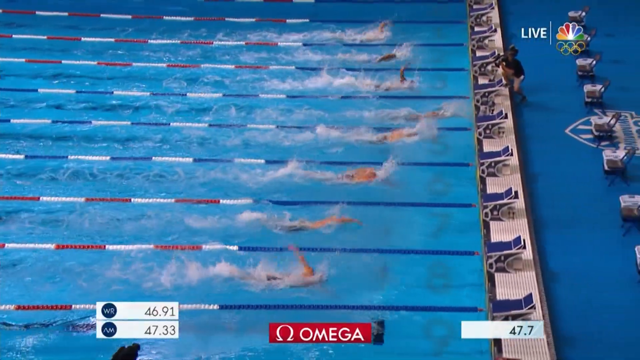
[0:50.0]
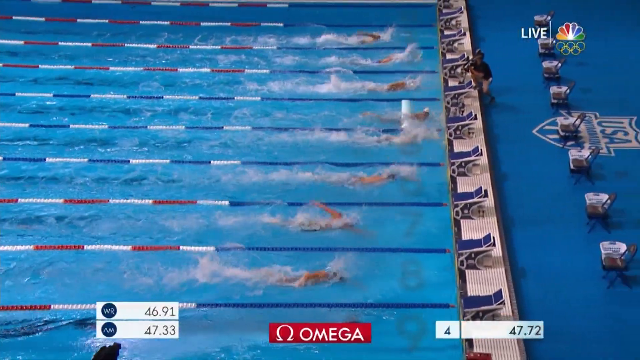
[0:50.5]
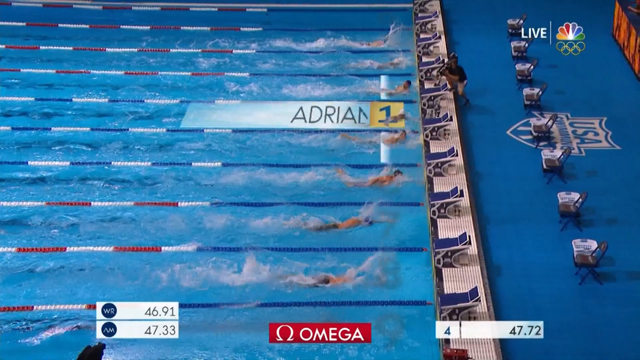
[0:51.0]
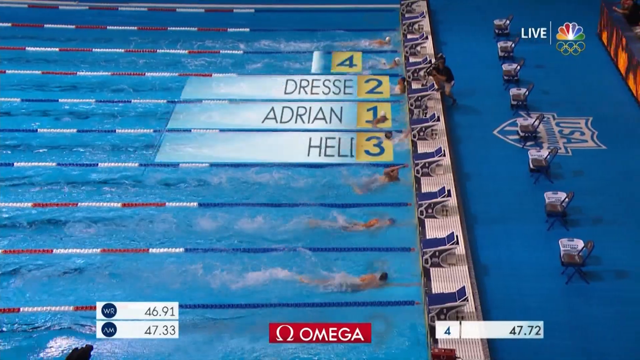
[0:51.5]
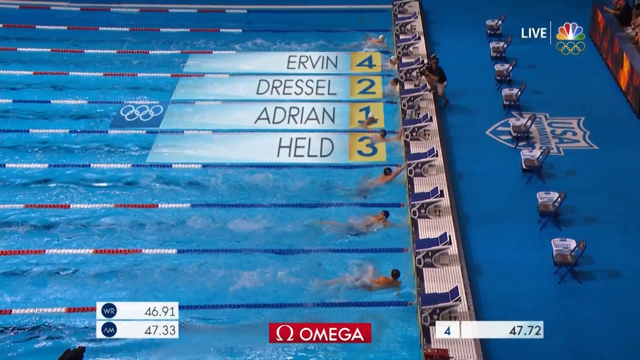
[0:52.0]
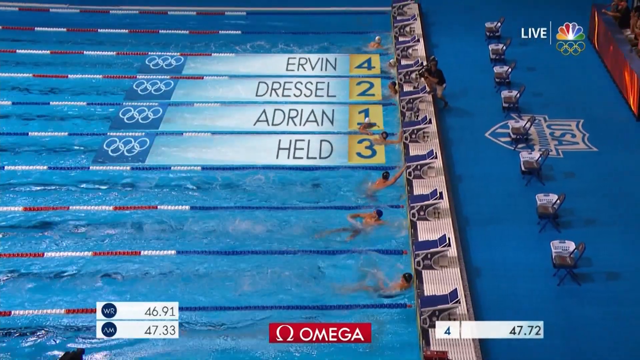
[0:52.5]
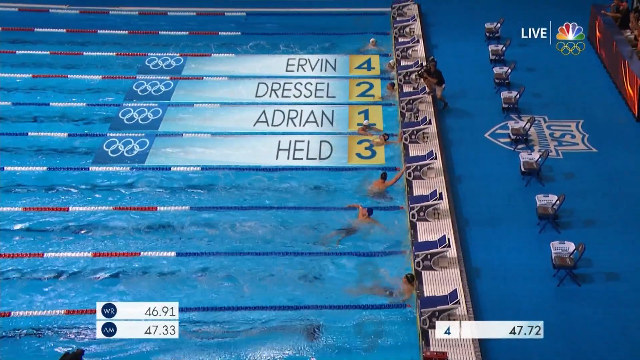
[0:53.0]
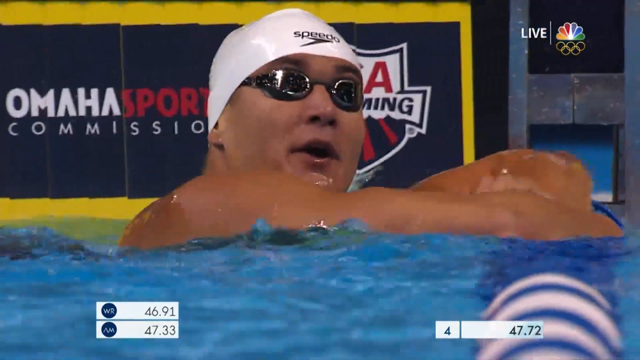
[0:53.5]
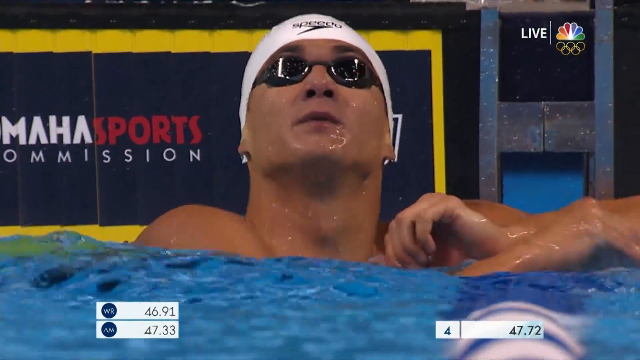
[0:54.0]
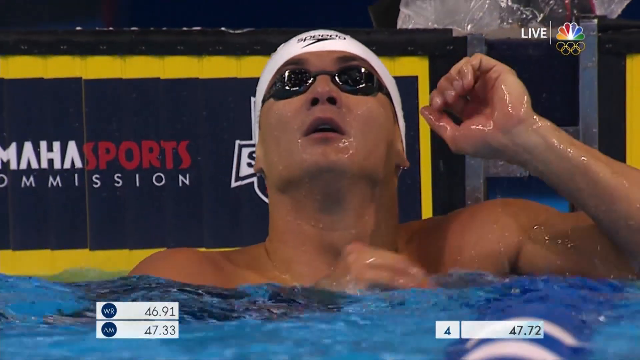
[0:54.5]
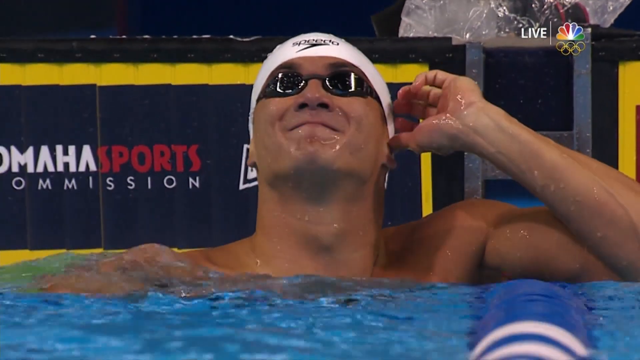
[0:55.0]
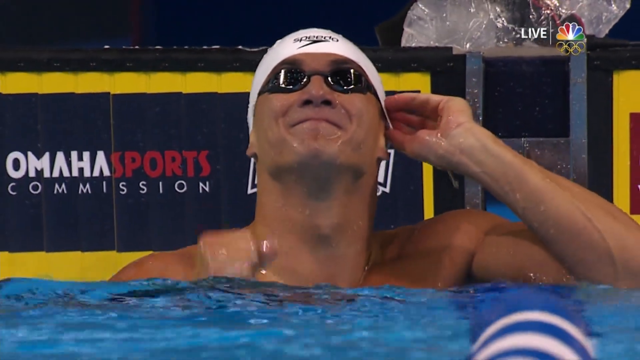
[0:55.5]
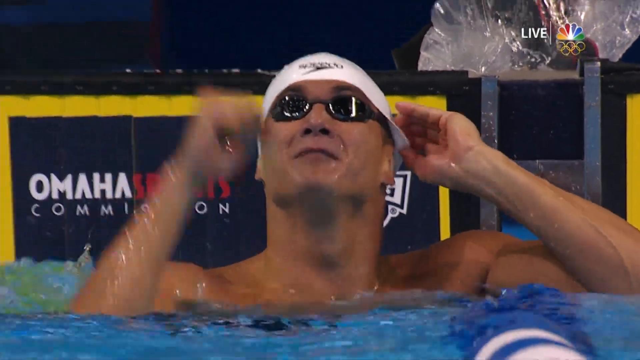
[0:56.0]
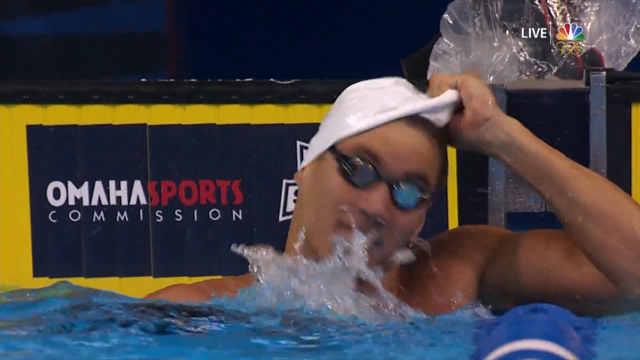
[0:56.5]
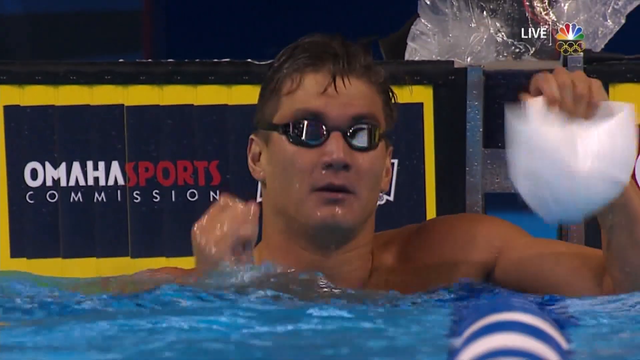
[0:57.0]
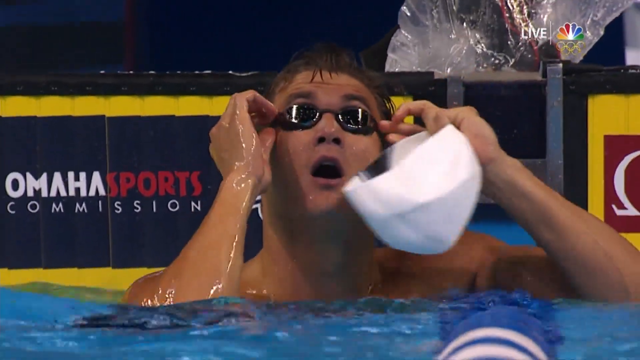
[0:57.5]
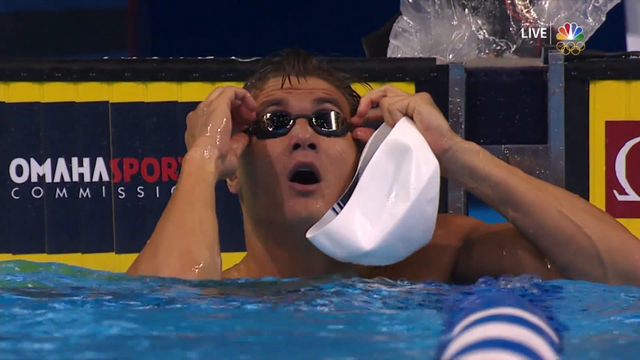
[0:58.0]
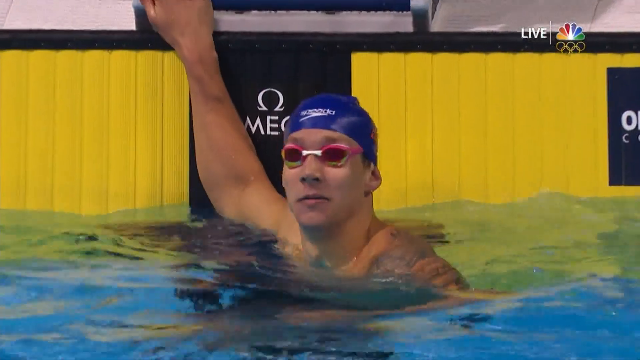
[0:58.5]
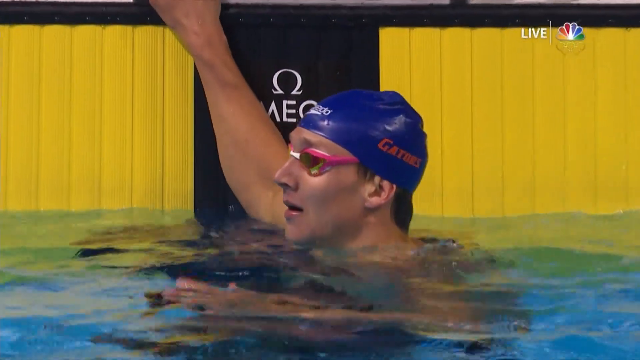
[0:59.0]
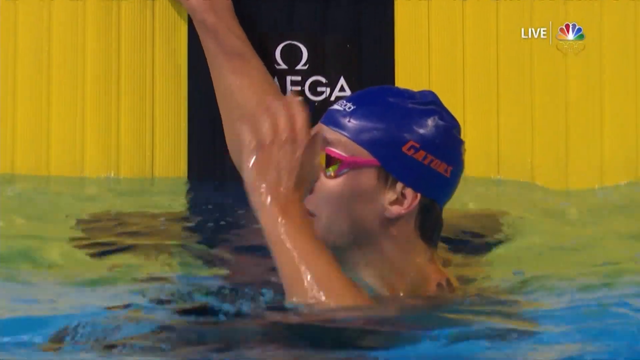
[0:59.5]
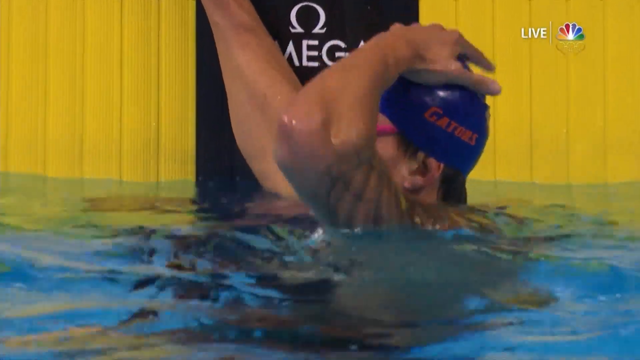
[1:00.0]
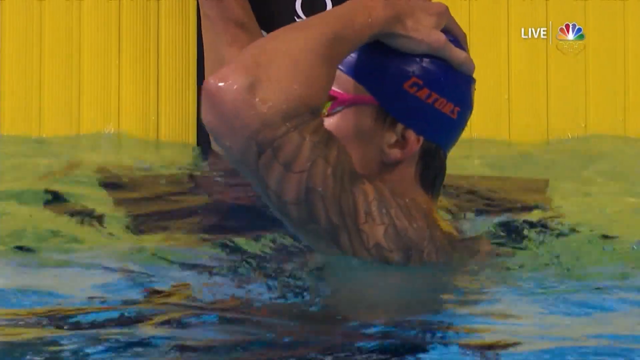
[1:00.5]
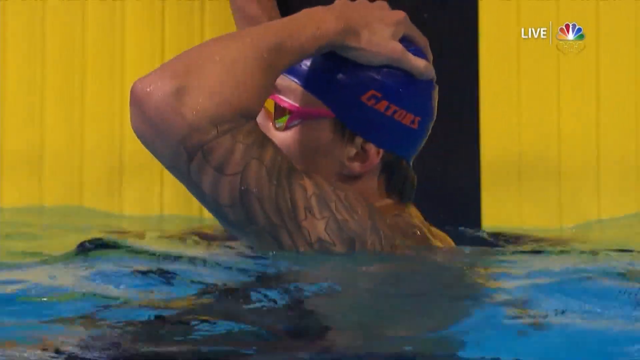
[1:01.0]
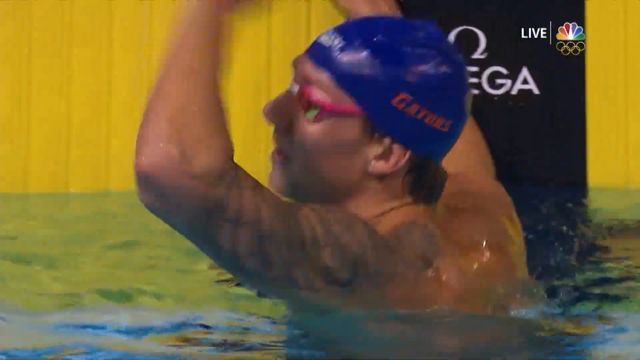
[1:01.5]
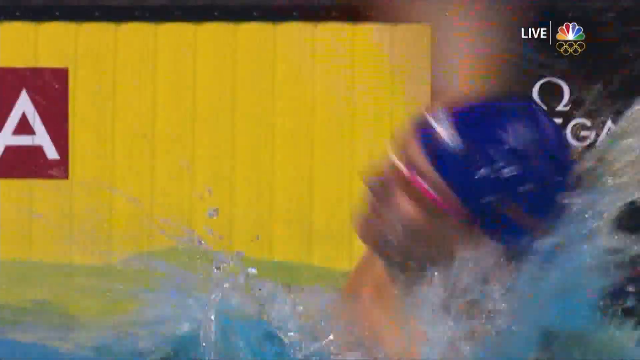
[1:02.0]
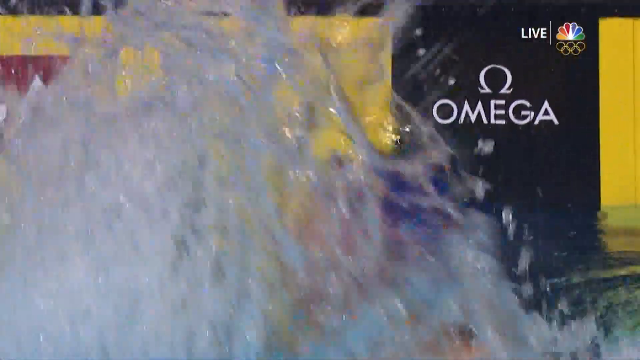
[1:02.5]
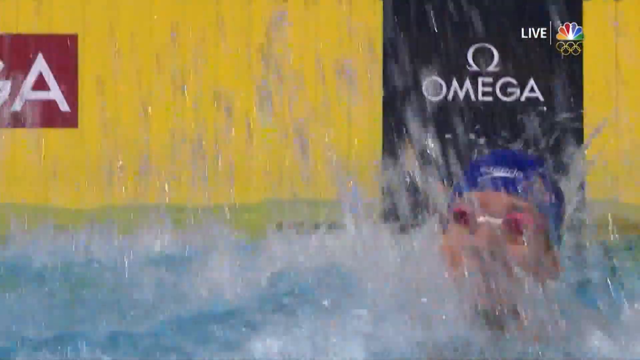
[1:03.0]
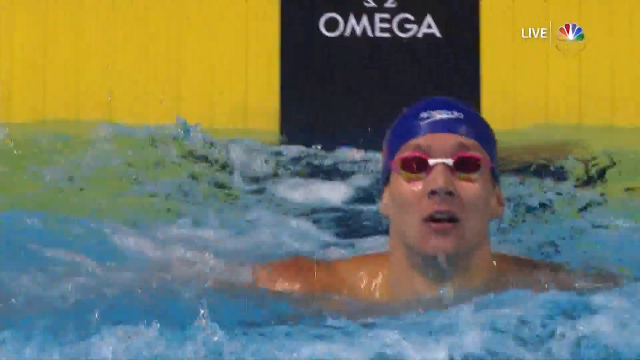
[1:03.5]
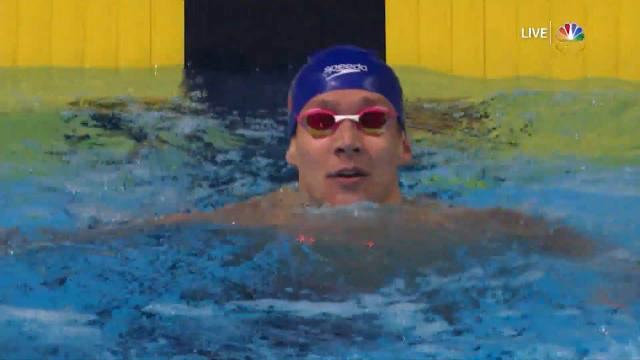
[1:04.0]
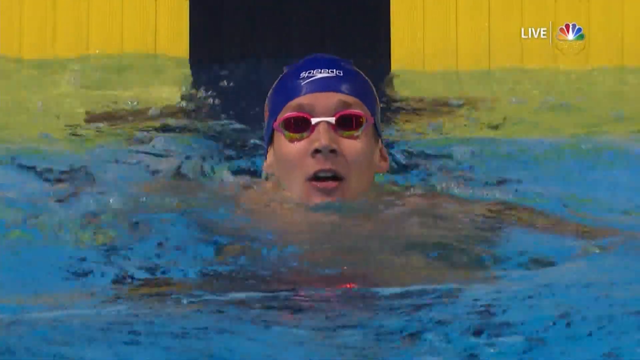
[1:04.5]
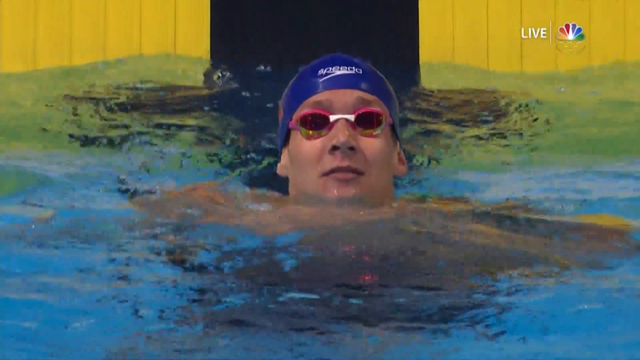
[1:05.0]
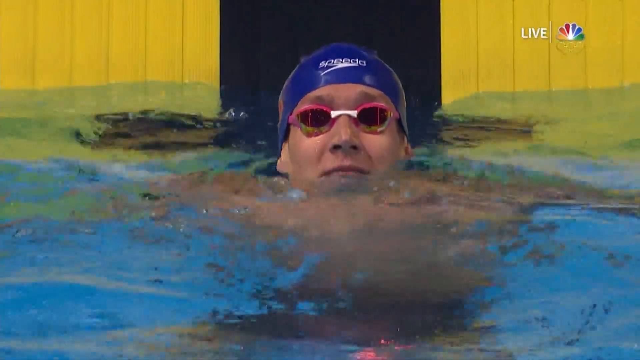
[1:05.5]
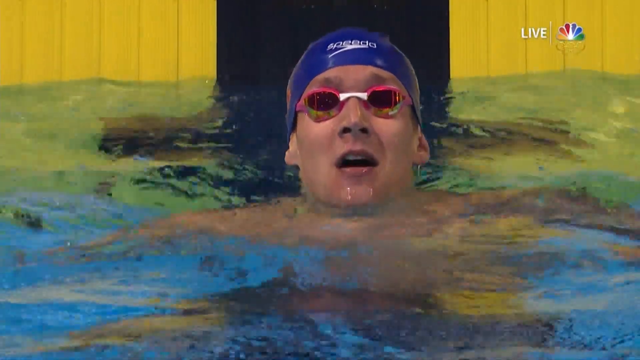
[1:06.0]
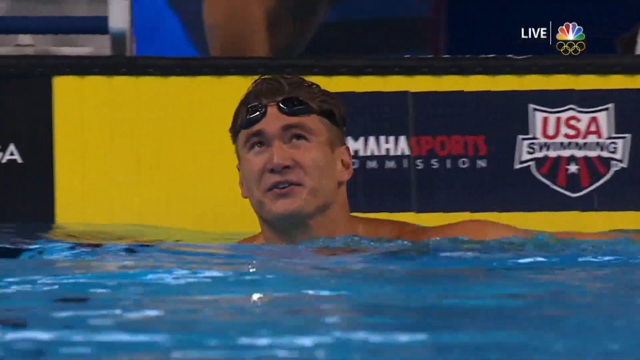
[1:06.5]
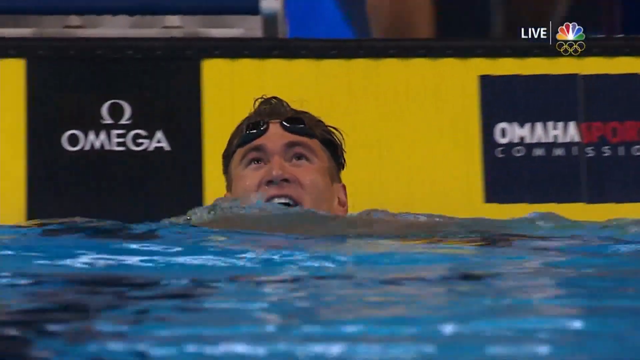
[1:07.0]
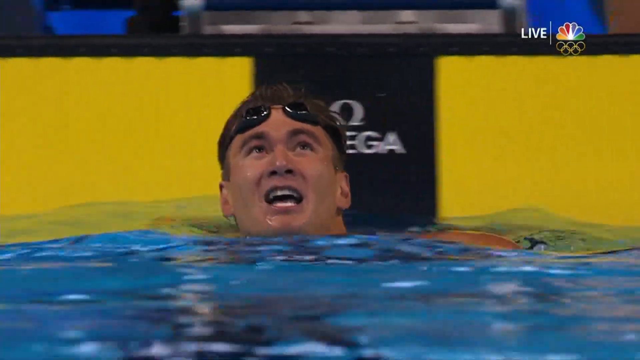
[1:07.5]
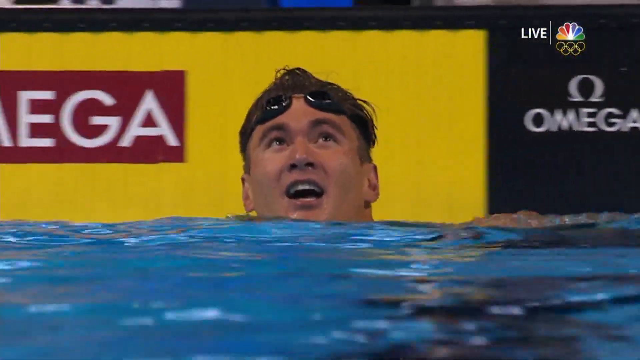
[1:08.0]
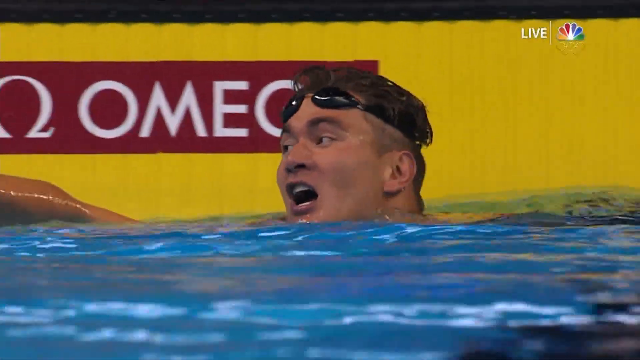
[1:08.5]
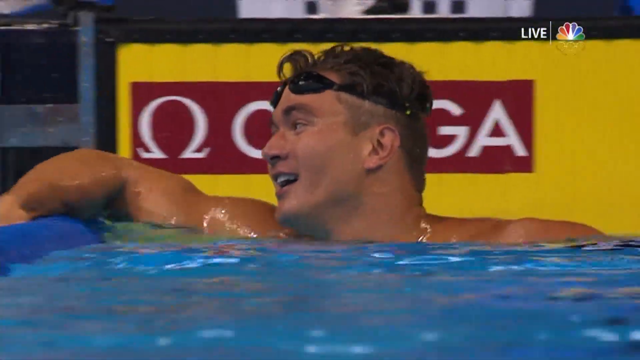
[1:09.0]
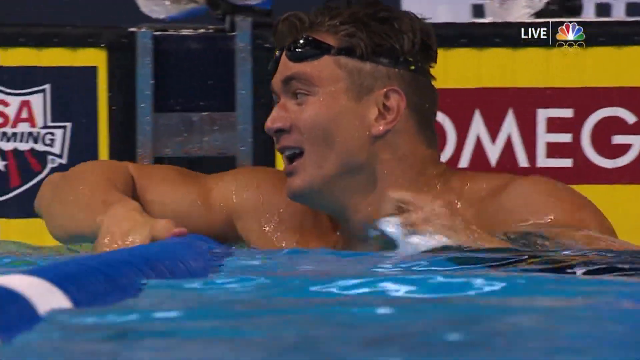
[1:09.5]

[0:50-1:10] The swimmers approach the other side of the pool to finish the race. The swimmer in the lead is the first to reach the other end and touch the wall. A man with a camera focuses it on the winner. As the first, second and third place swimmers reach the end of the pool, their names are projected on top of the water, with positions 1, 2, 3 and 4 shown: Adrian in position 1, Dressel in position 2, Held in position 3 and Evan in position 4. The camera focuses on the winner, who raises his right fist in celebration while taking off his white swimming cap with his left hand; he wears dark swim goggles, which he also takes off. Another swimmer, wearing a blue swim cap with the brand name Speedo written across the top, hits his fist on the water; he looks like he is disappointed. The camera focuses on the winner again, who smiles as he gasps for air.